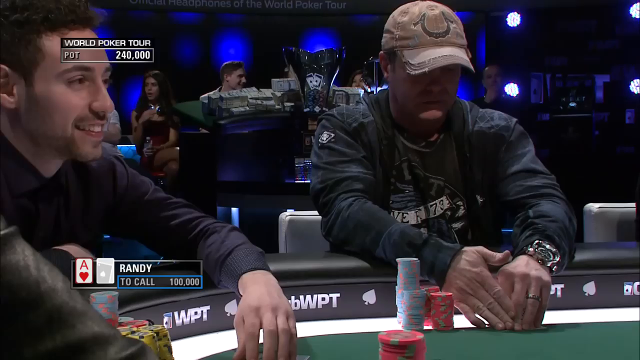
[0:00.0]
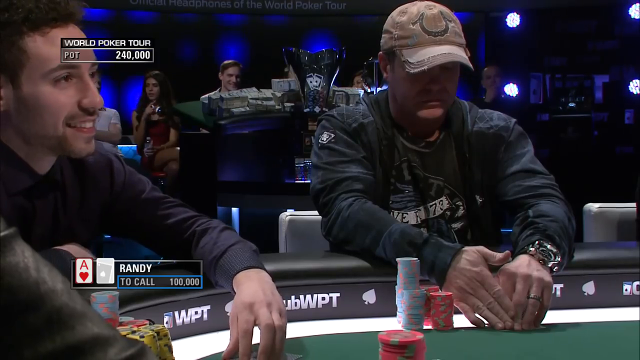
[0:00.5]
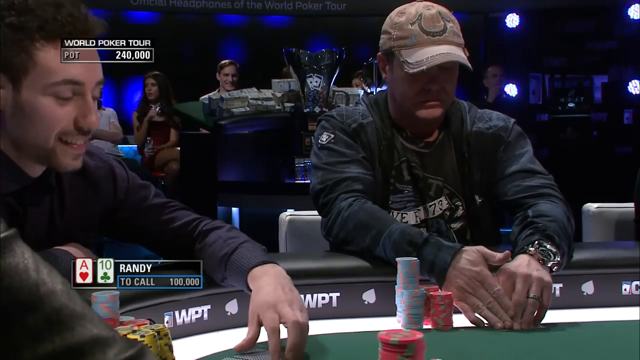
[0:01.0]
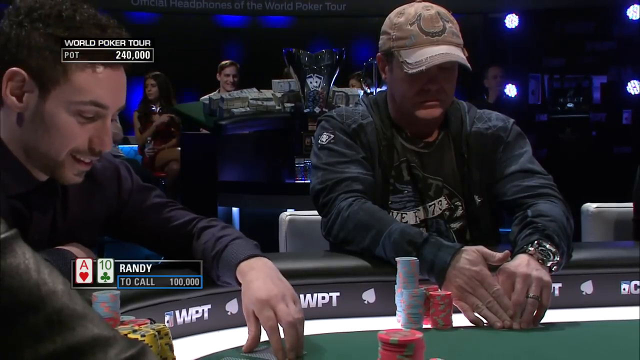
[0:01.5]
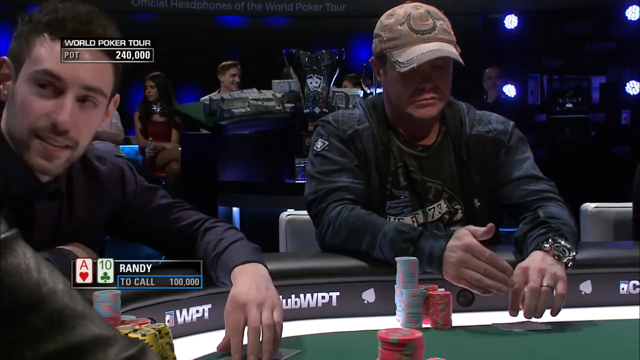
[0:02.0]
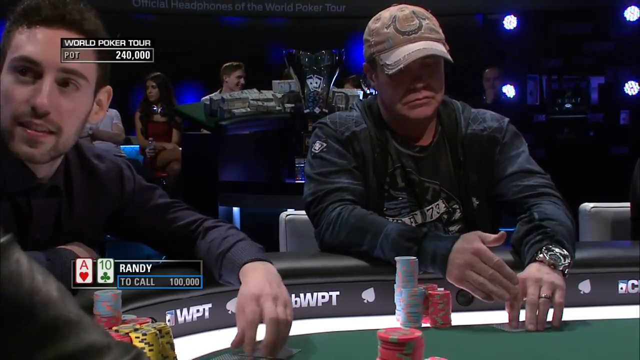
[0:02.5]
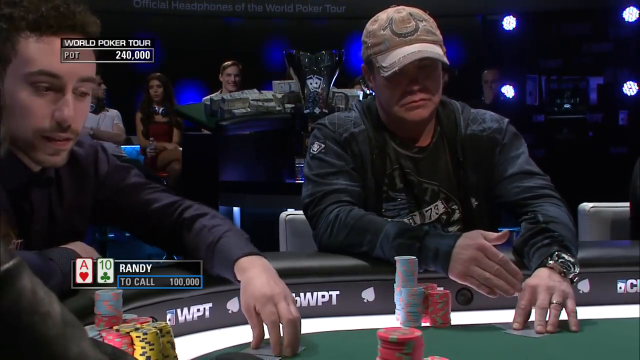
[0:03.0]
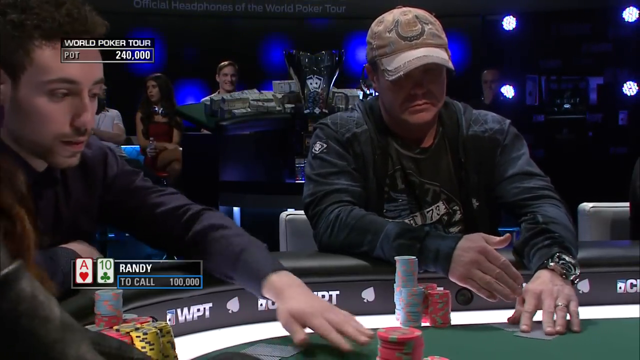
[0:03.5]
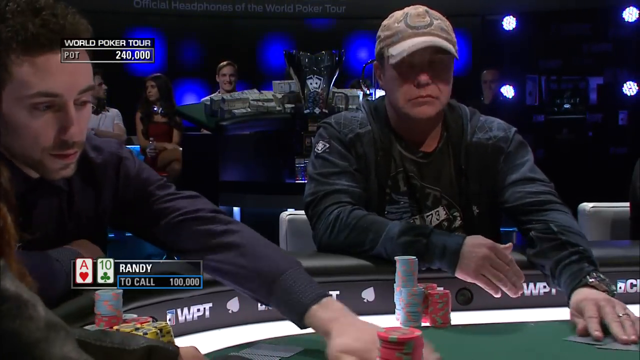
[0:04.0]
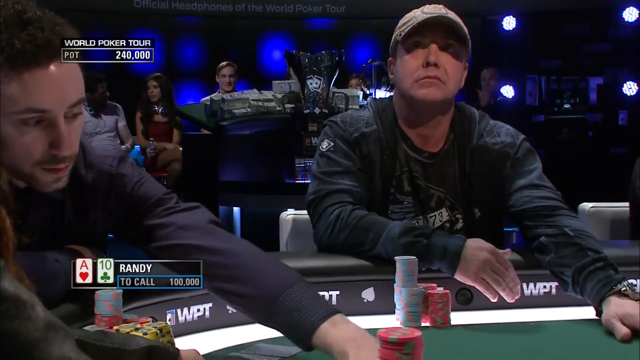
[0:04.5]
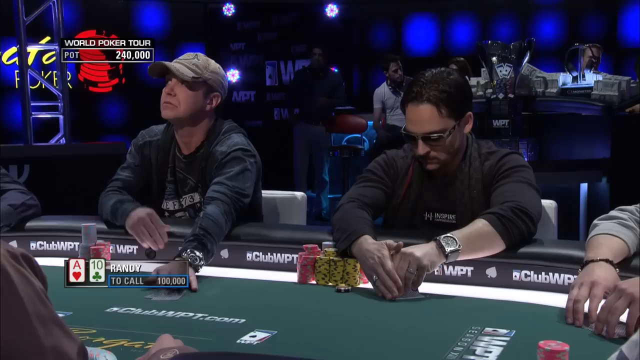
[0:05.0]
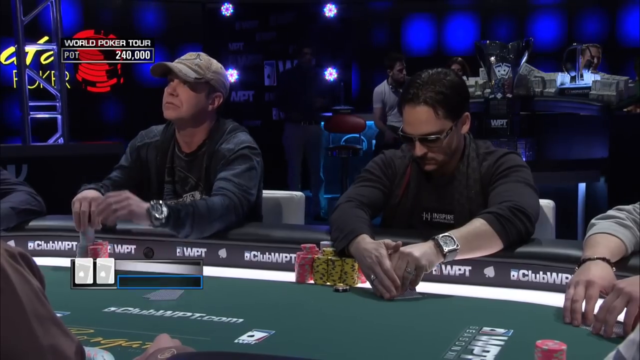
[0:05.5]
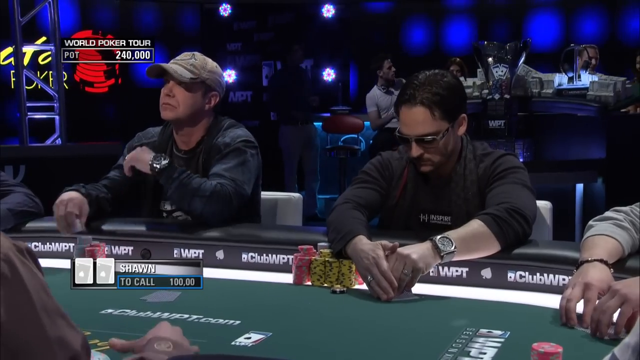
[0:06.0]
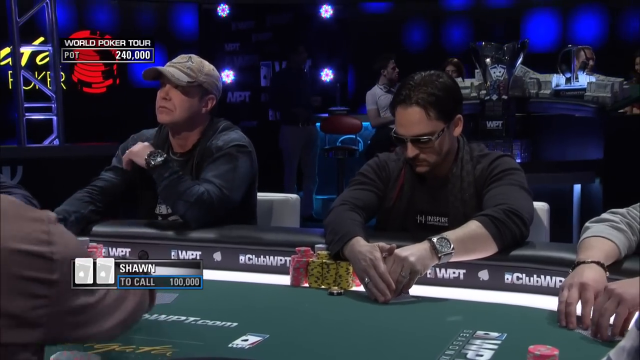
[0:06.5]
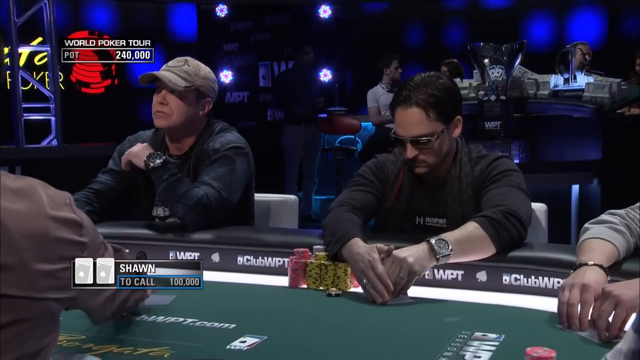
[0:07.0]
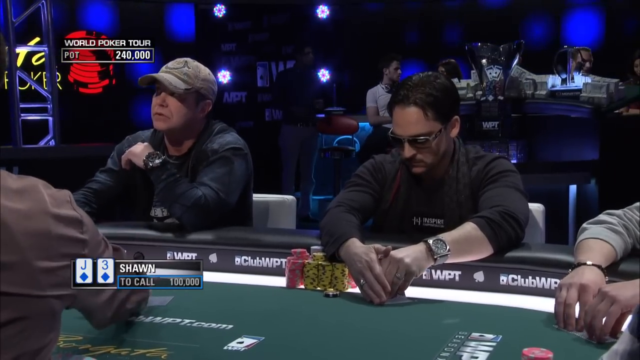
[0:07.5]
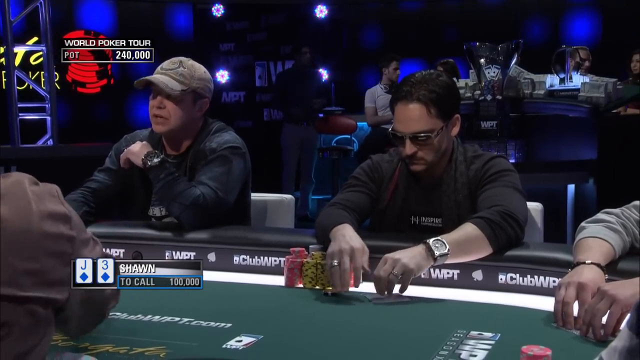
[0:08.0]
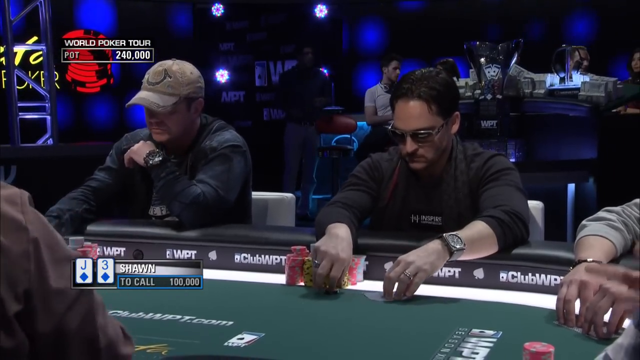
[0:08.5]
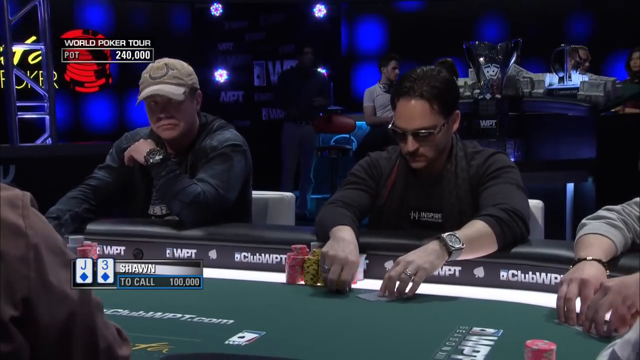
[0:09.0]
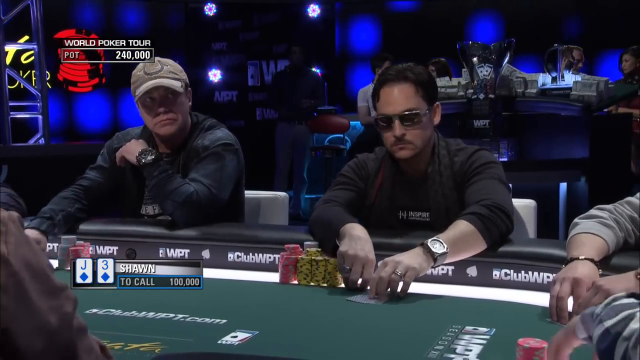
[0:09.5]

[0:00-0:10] What appears to be a live stream shows people sitting at a poker table. Two men are in the front. One wears a beige hat with a U on it and appears to be wearing a dark gray jacket; he has a watch on his left hand and presses his left hand down onto the deck of cards below him. Next to him is another man with brown hair who appears to be younger and has a subtle beard. Text in the bottom left reads "Randy to call 100,000", and a stack of poker chips is visible.